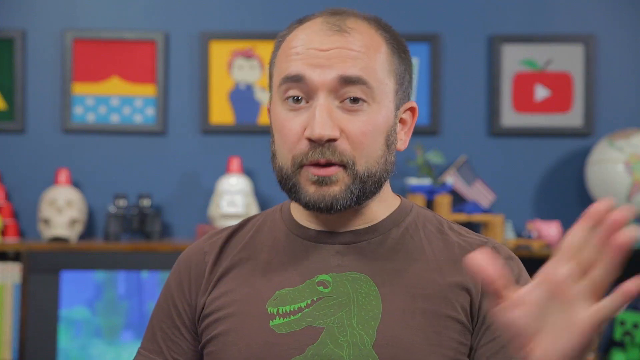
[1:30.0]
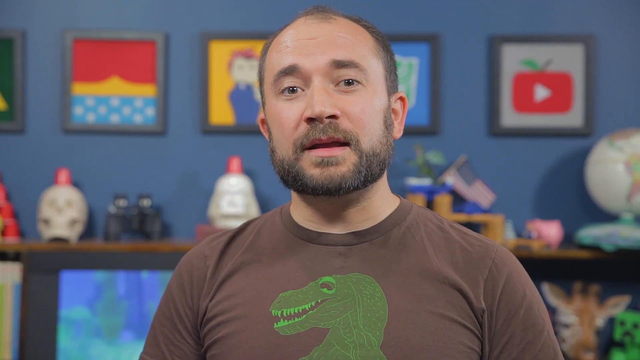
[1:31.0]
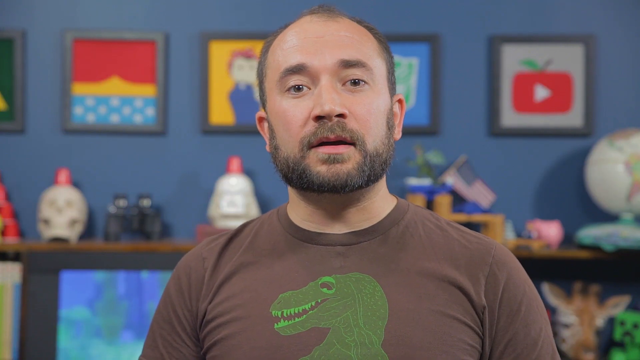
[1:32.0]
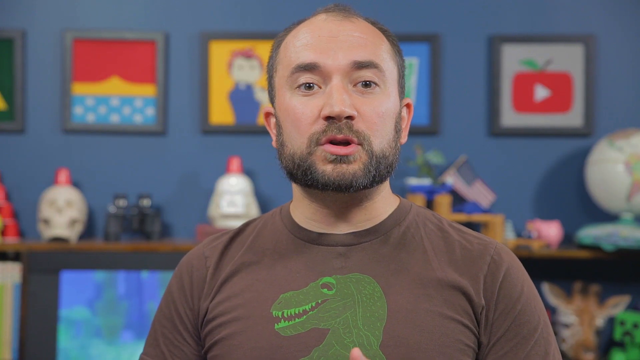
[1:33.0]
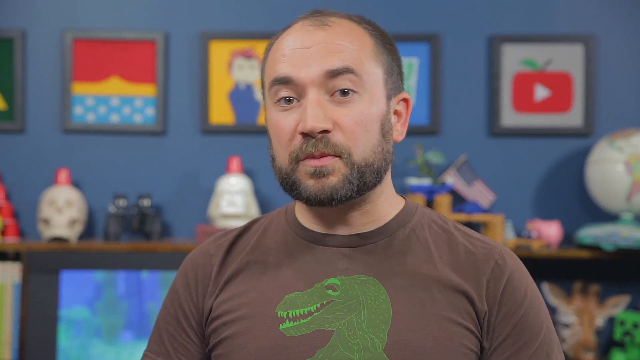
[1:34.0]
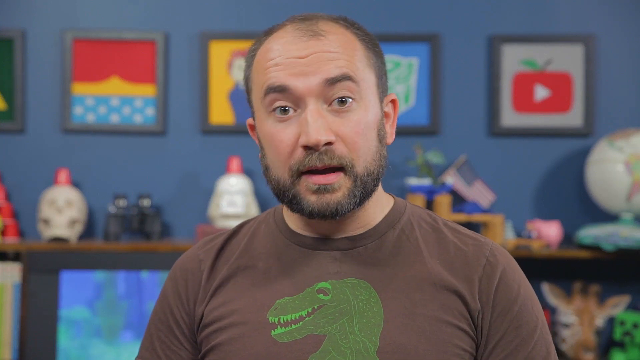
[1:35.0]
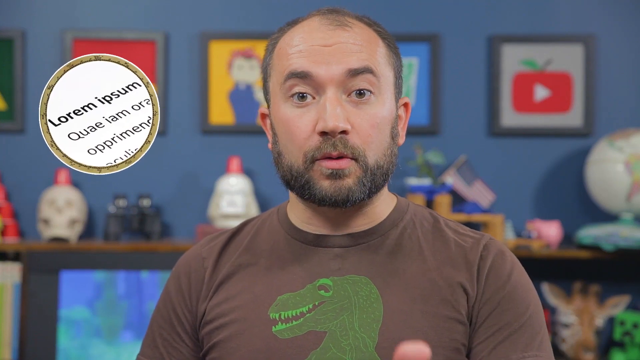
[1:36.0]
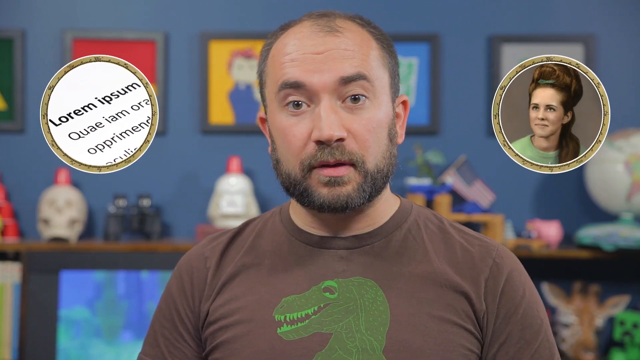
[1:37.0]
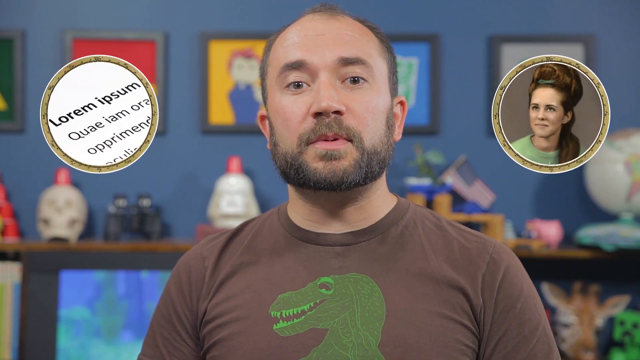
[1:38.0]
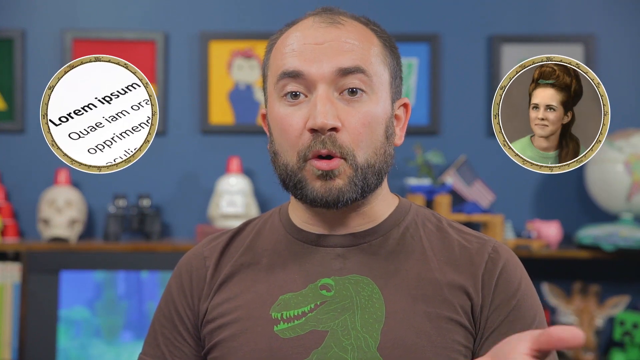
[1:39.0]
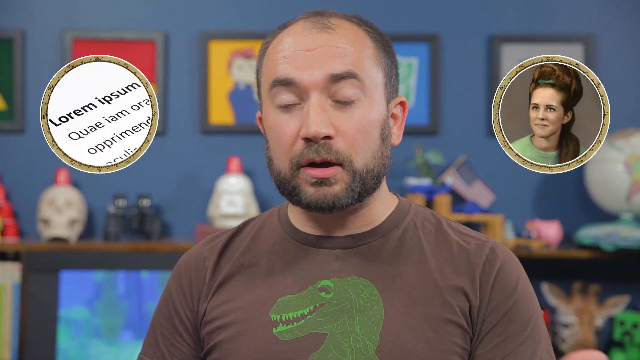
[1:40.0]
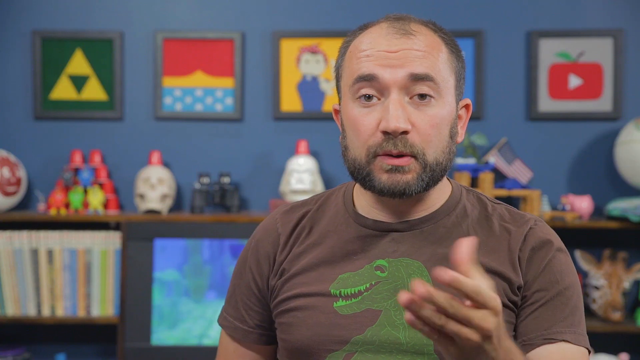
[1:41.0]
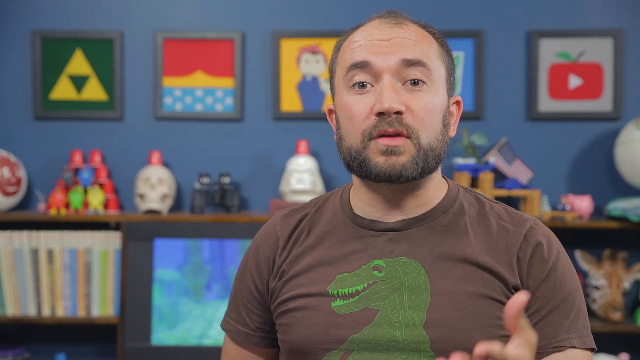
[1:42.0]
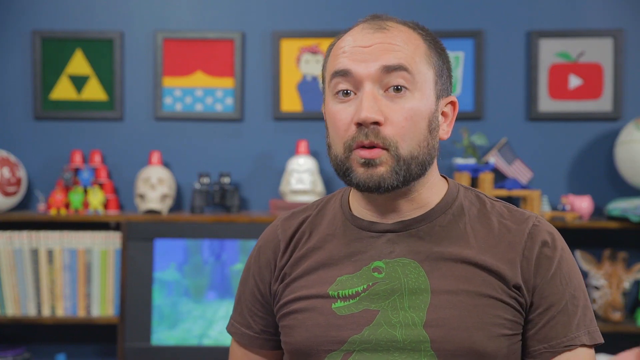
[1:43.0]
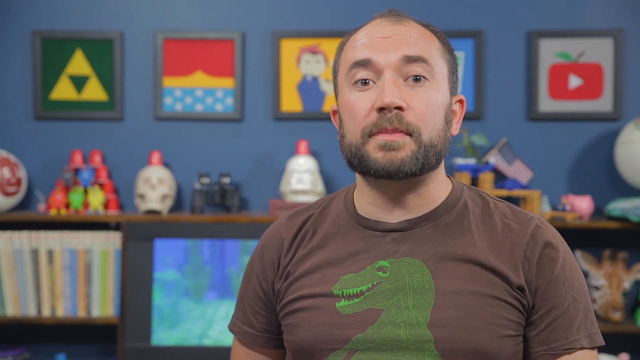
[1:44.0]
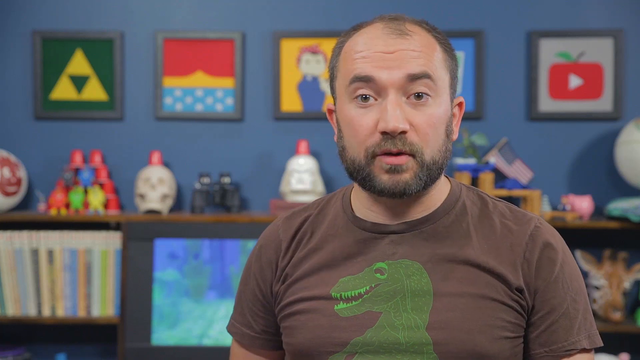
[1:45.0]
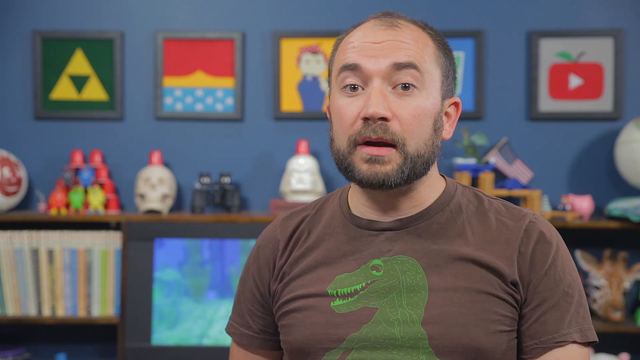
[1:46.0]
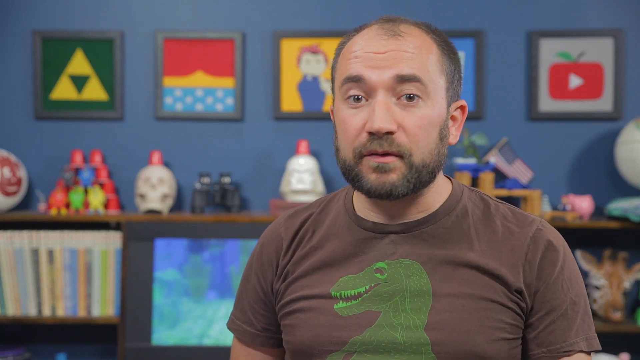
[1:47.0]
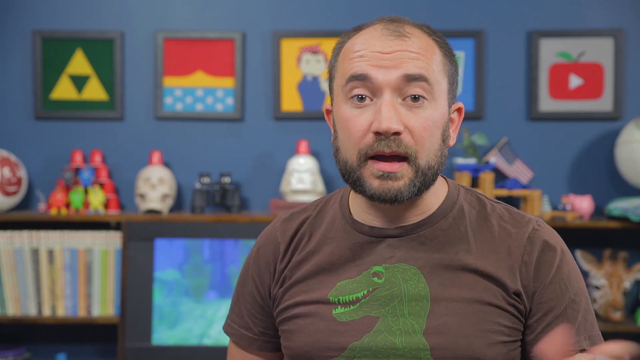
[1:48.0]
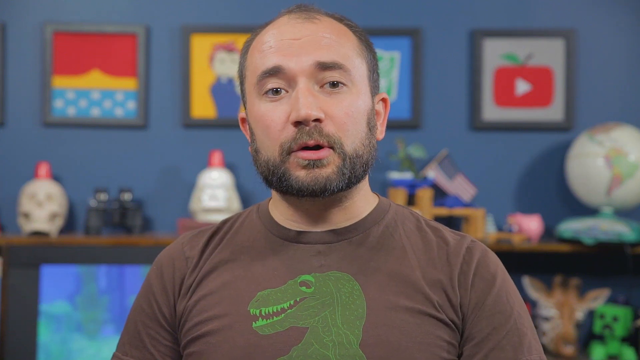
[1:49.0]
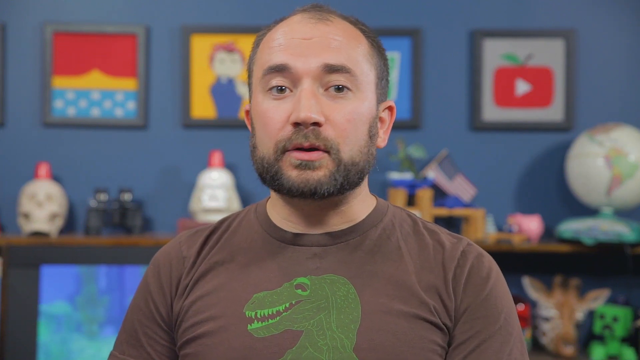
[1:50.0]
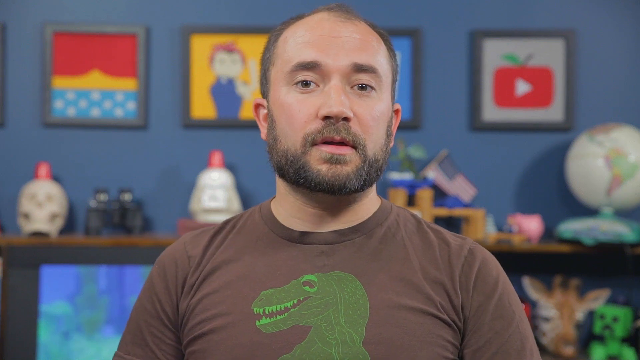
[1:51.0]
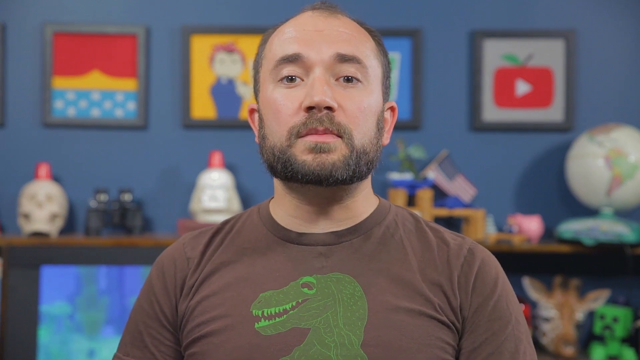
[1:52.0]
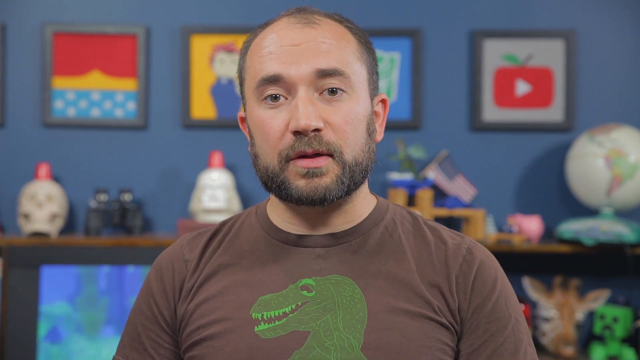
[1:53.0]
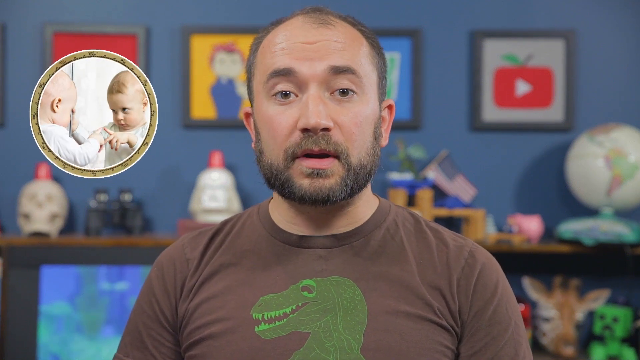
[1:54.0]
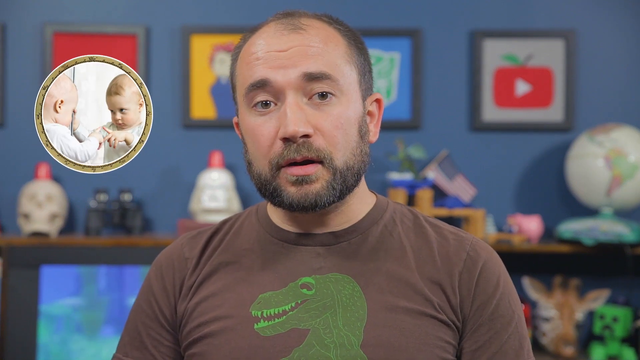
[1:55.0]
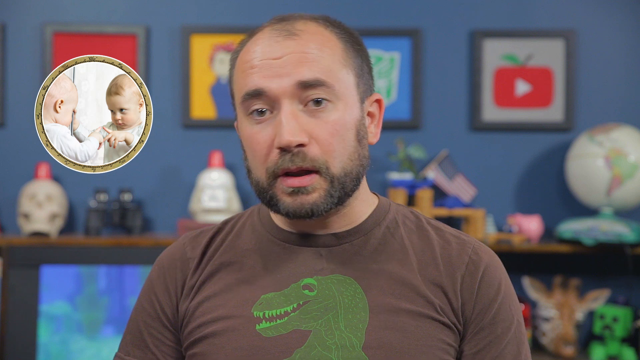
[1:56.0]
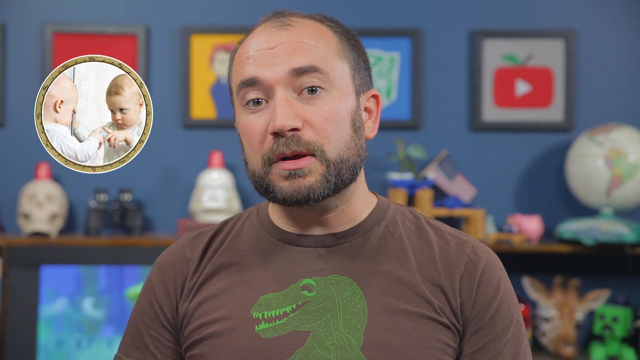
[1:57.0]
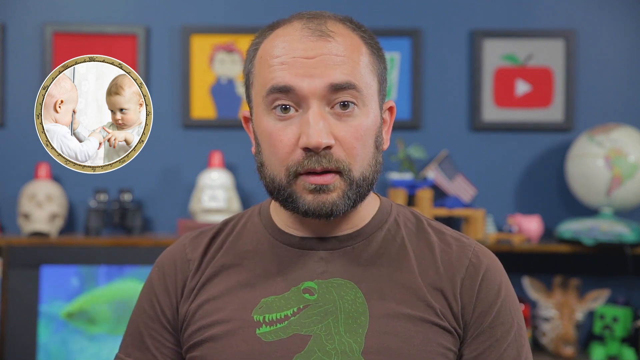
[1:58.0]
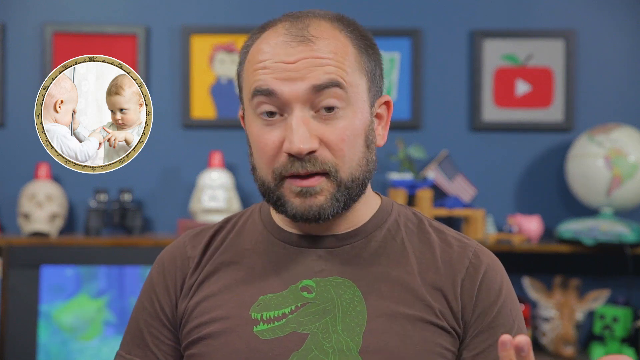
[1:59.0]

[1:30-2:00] A man looks towards the camera and speaks, wearing a brown shirt with a green dinosaur on it and using his hands for emphasis. Behind him are a number of items and objects, including pictures or paintings and items on a shelf. Small images pop up in two small circles on either side of him: one with Latin text and, on the other side, one with a painting of a woman. Those disappear, and the camera cuts to show the man from a little further back as he continues speaking towards the camera and using his hands for emphasis. It cuts again to a closer view of him. To his left, another small image appears in a circle, showing two babies reaching out towards each other.